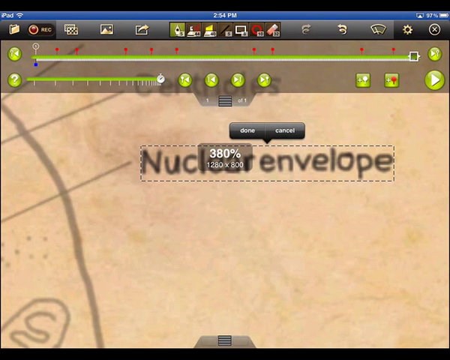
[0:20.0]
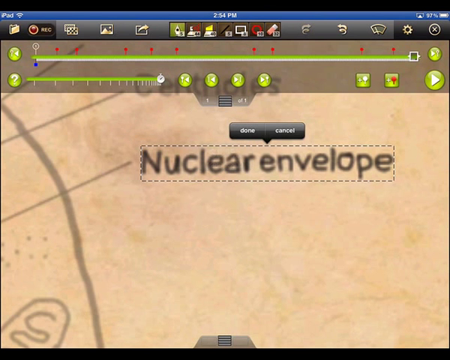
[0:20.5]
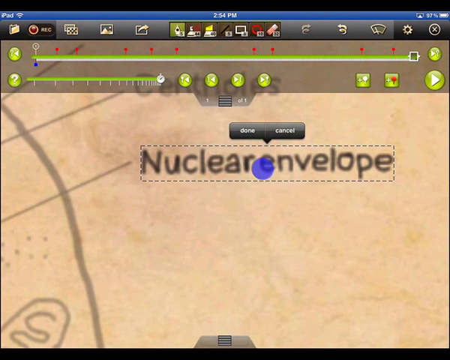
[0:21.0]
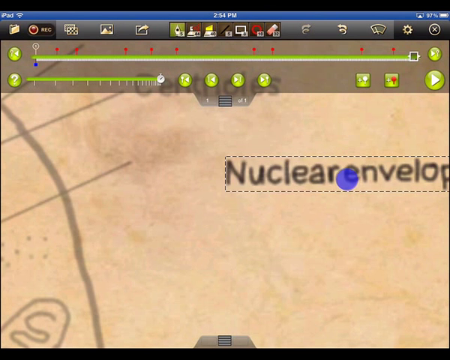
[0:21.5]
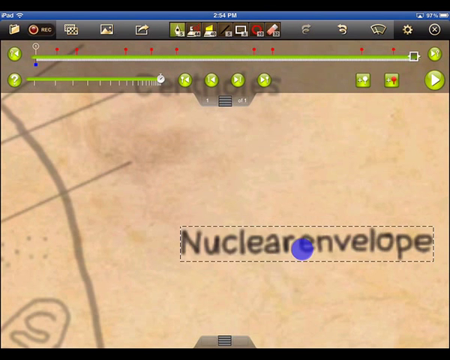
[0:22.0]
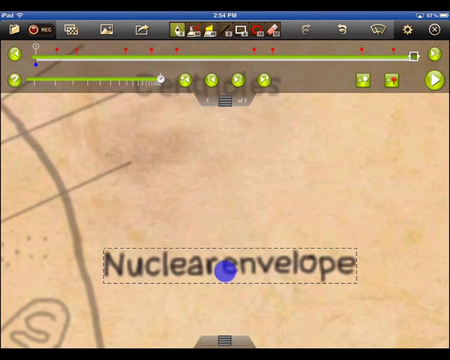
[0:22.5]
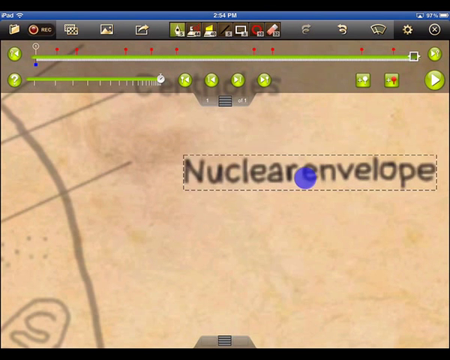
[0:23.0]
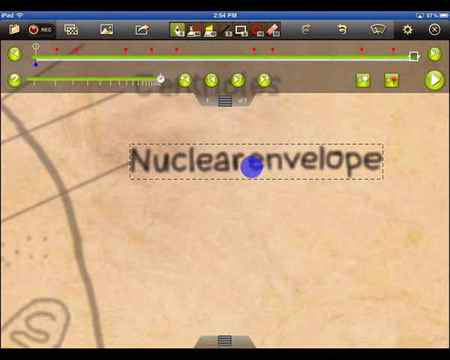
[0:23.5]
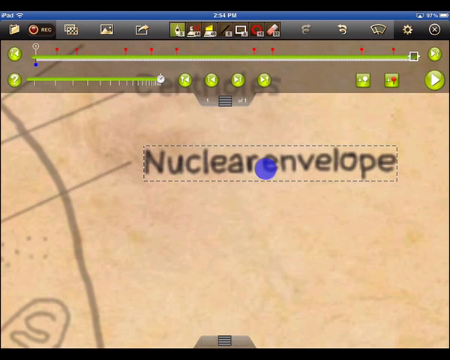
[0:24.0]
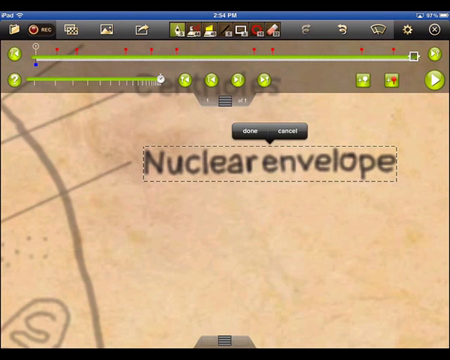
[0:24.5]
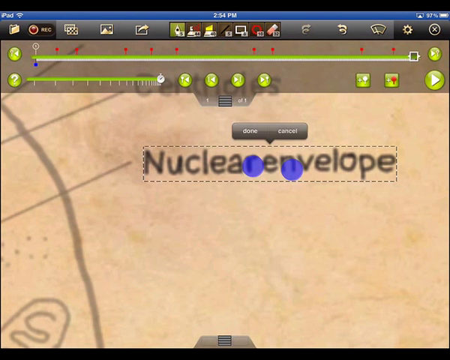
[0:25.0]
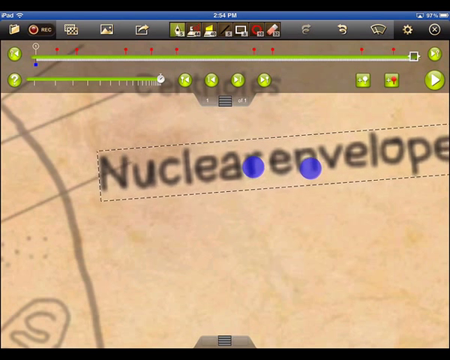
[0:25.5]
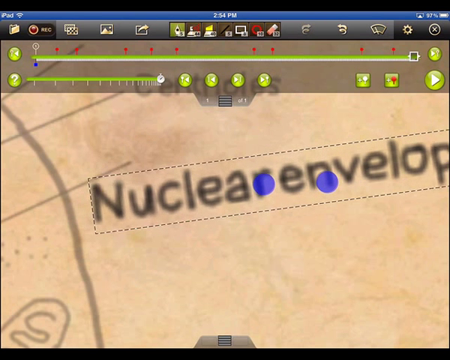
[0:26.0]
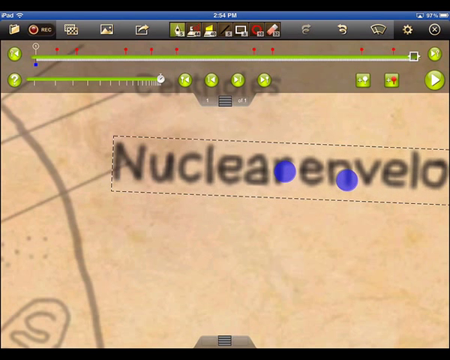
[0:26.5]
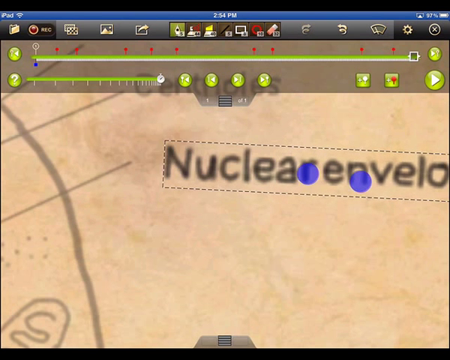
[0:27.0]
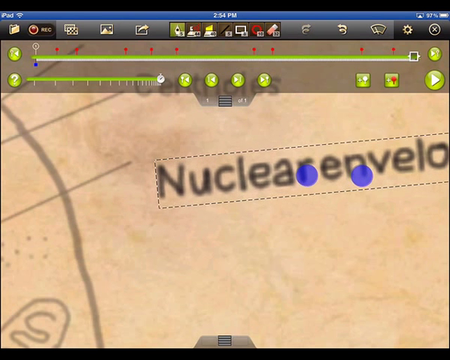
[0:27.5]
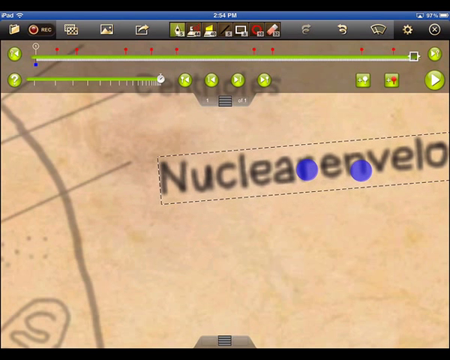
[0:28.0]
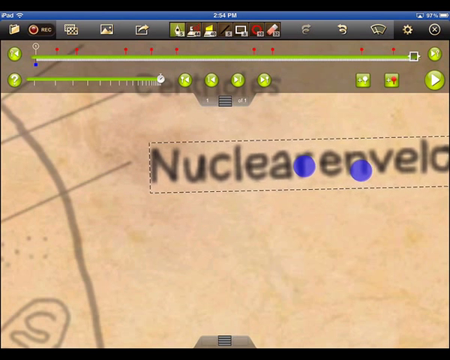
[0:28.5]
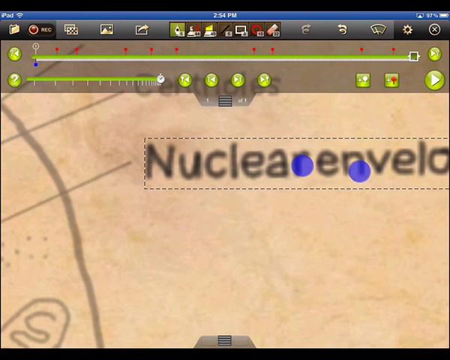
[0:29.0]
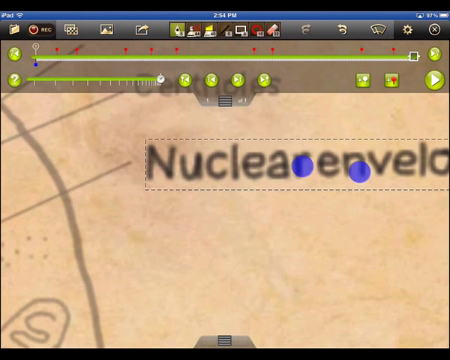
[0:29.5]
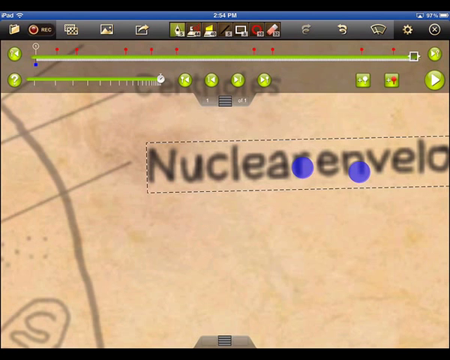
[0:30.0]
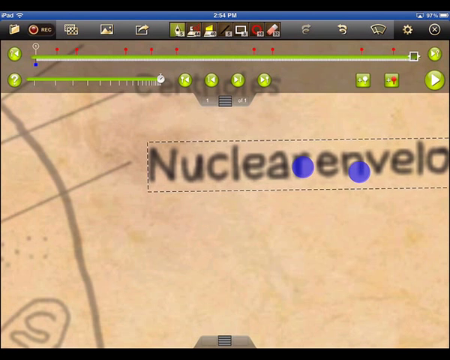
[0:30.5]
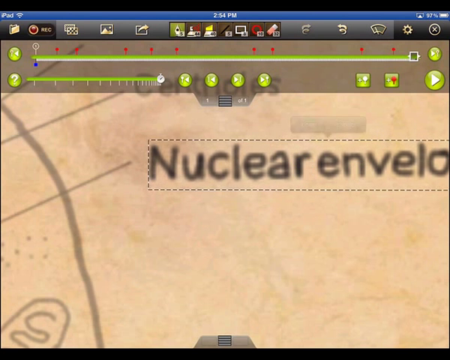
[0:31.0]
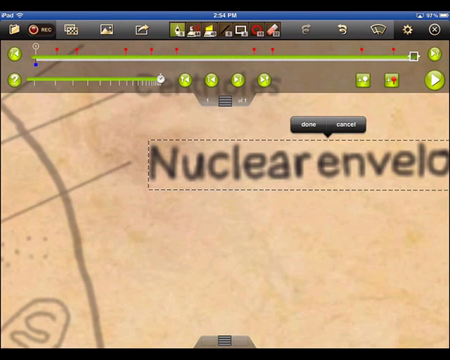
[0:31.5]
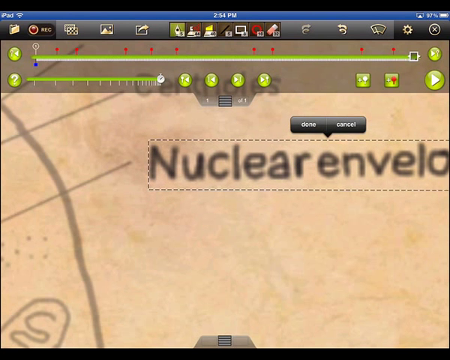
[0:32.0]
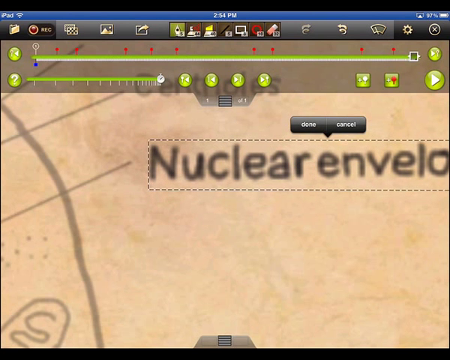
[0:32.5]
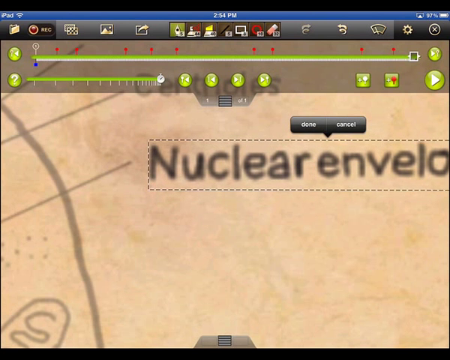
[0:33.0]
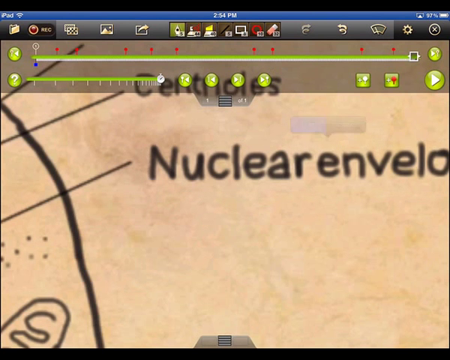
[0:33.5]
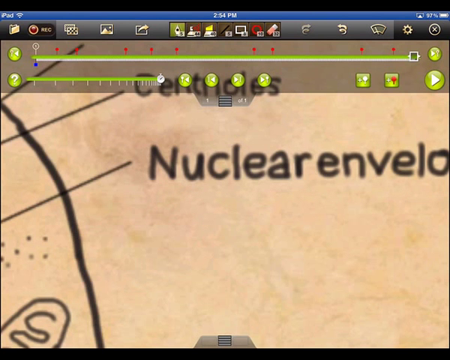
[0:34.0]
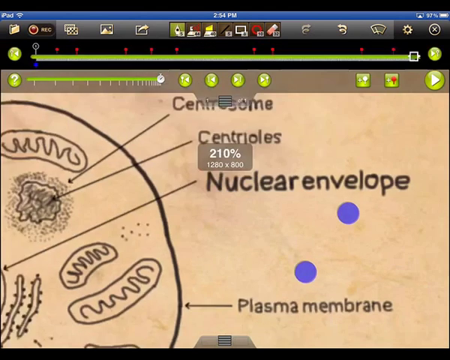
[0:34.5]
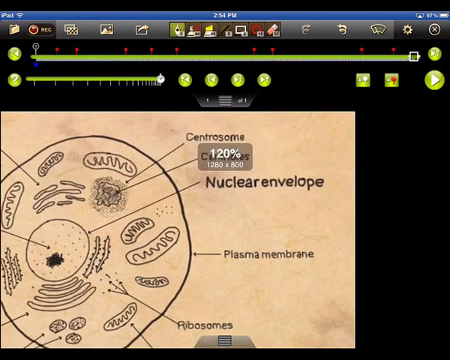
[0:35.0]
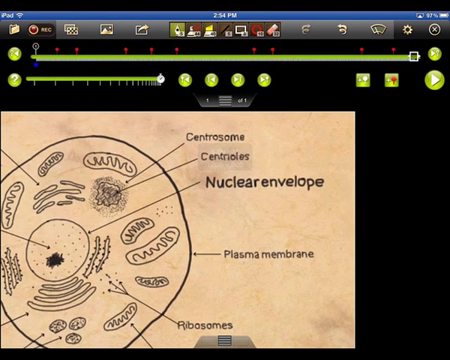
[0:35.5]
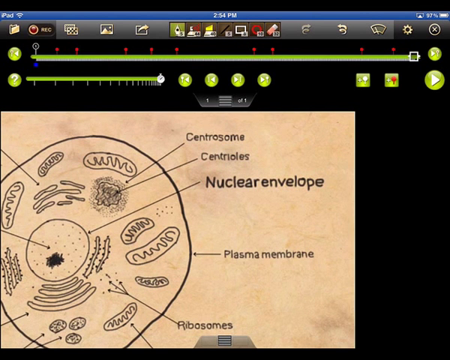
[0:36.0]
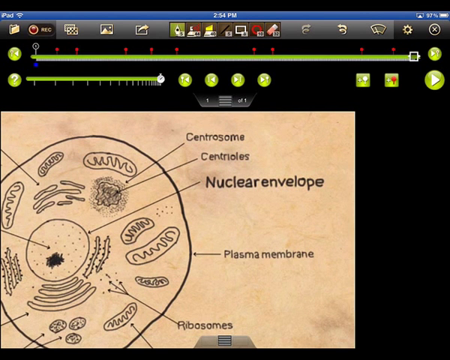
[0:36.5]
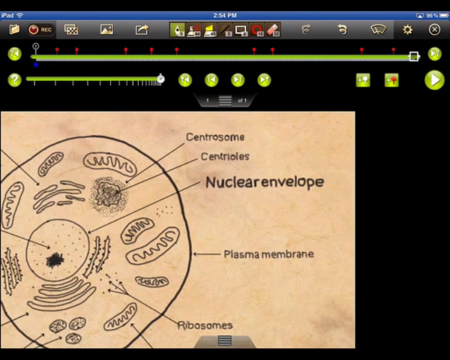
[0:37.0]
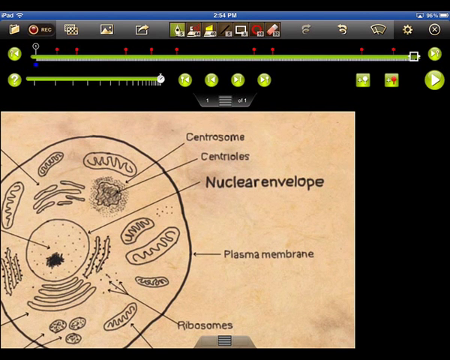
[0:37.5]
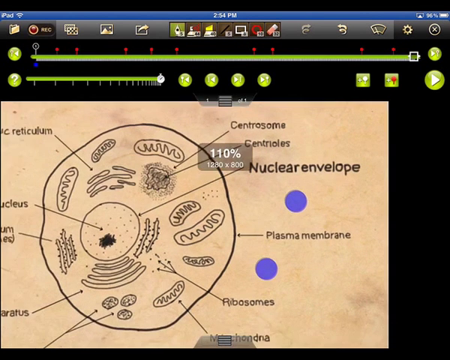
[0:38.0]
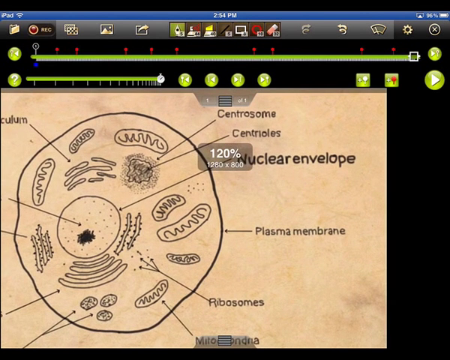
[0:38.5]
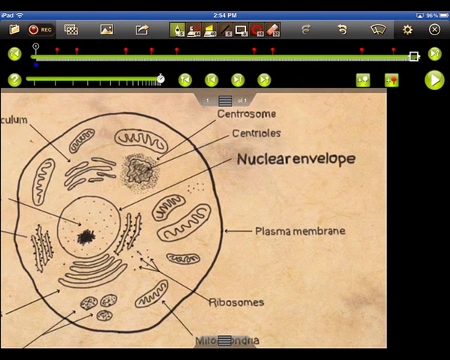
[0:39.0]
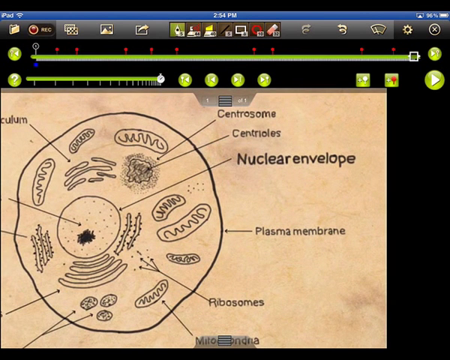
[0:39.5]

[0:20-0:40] The nuclear envelope has been cut, and two blue dots are visible. It is copied and the page is zoomed out. The view is then zoomed in a little, and the nuclear envelope is pasted back where it was. The page can be held and moved anywhere and zoomed, probably using the lasso tool. When the page is zoomed, other labelled cells on the diagram are visible. The focus remains on the nuclear envelope, which is circled, moved, cut and copied, and the view is zoomed in. The tools are still on top of the diagram, in colours such as green, brown, black and white. No other changes or text are visible.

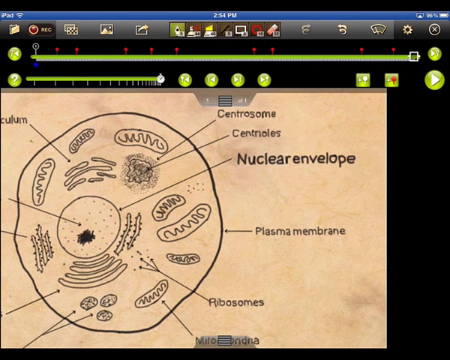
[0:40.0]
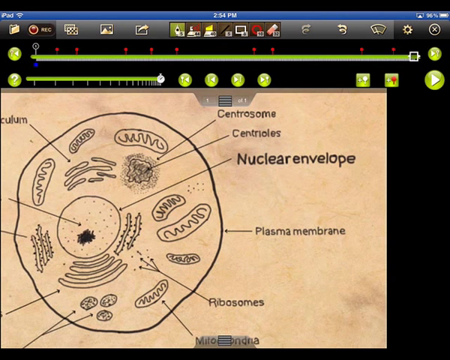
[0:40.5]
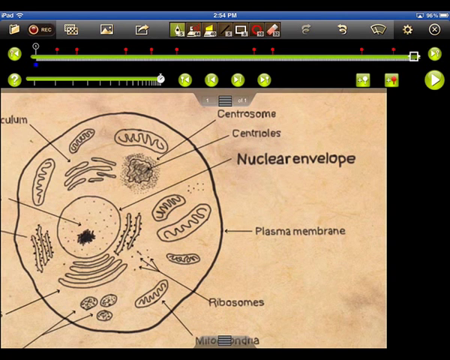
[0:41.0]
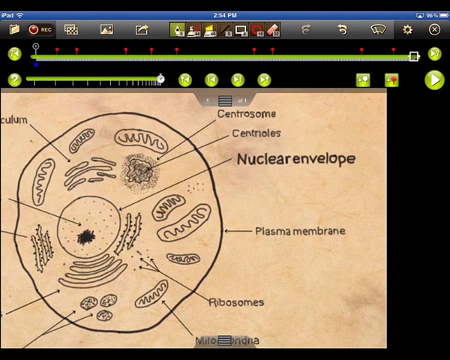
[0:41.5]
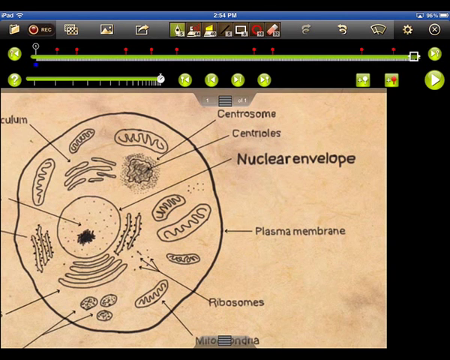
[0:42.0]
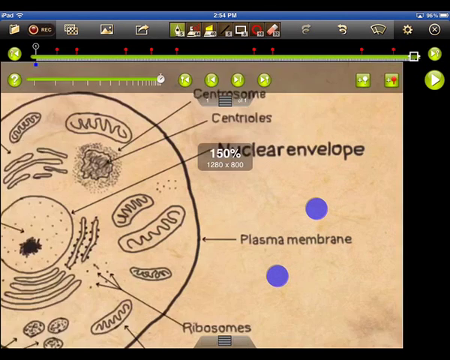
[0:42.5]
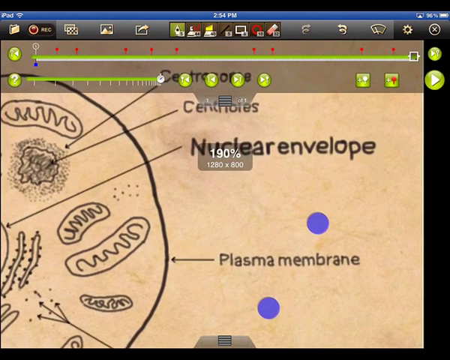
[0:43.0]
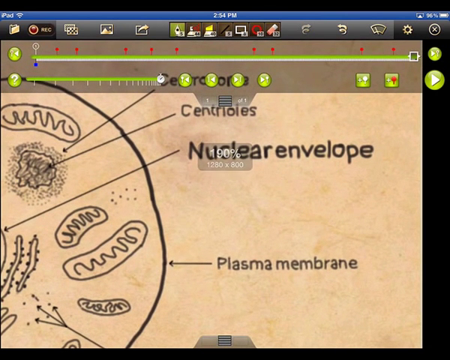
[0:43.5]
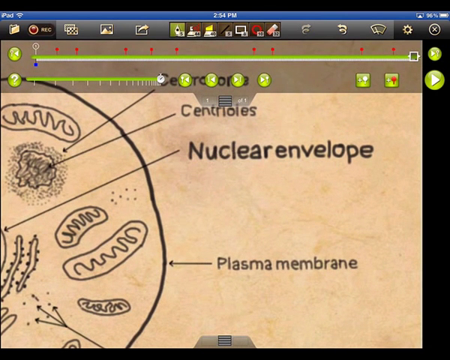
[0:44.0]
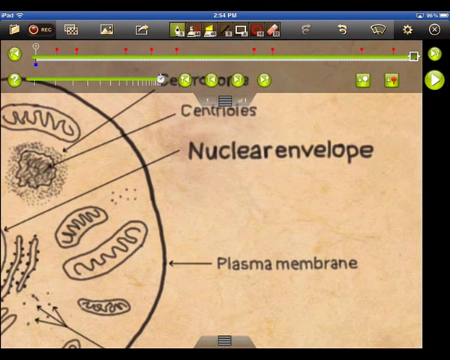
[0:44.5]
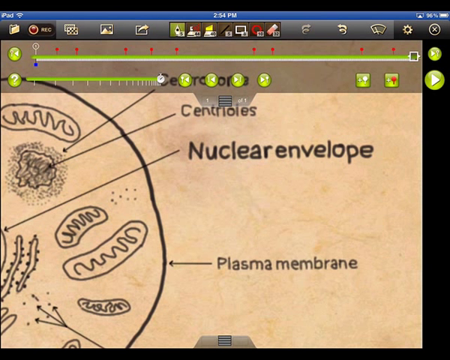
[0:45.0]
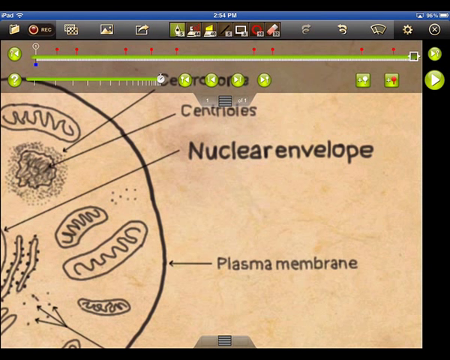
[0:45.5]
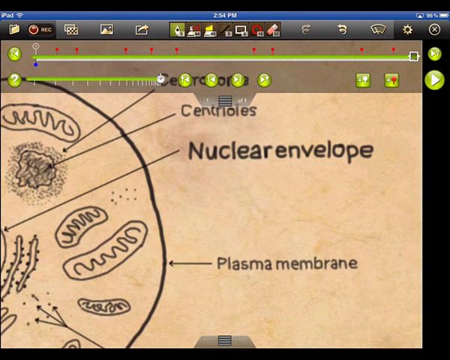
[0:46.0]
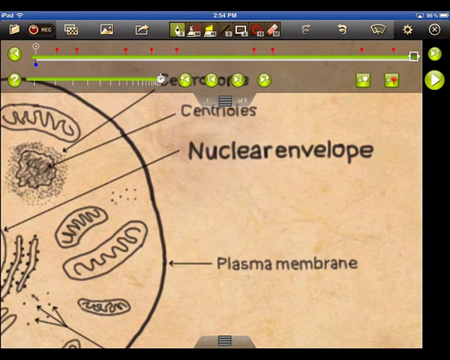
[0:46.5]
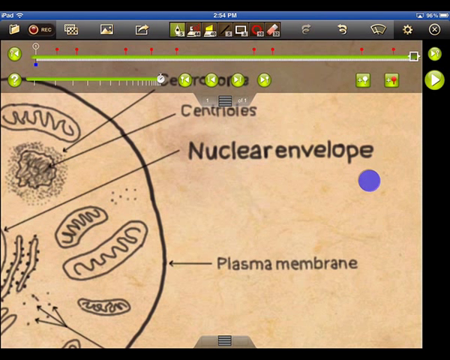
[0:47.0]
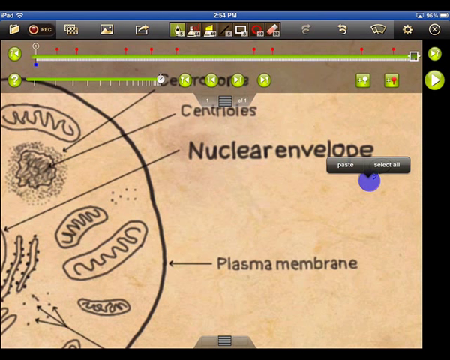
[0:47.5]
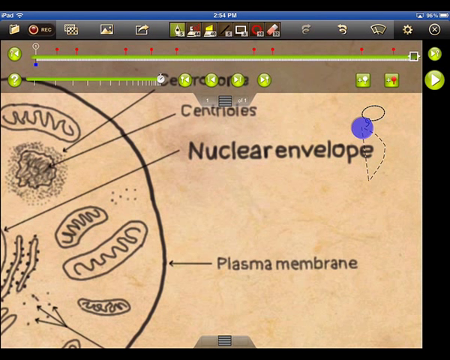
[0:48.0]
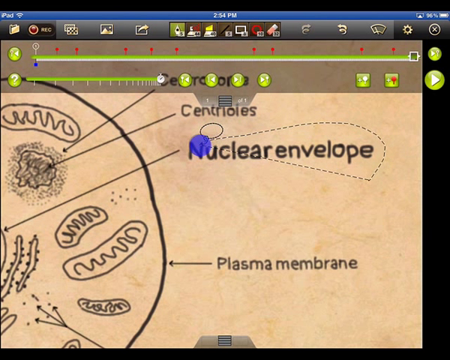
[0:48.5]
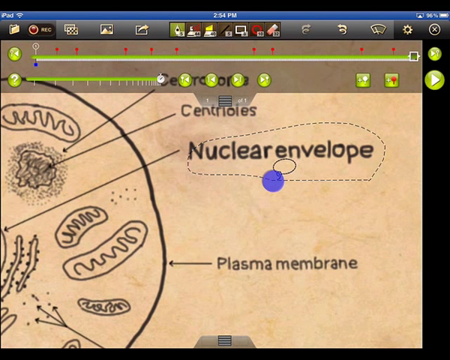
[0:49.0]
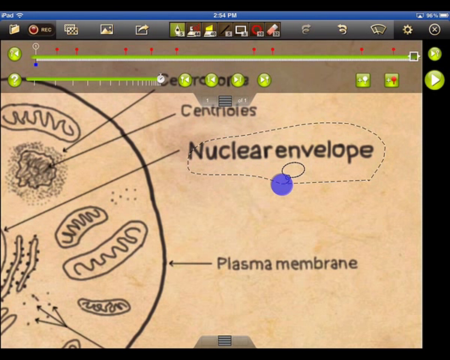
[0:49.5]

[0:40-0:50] The cell diagram is zoomed in to the nucleus, and the nuclear envelope is marked. The diagram depicts a cell with several labelled parts, including the centrioles, the nuclear envelope and the plasma membrane.